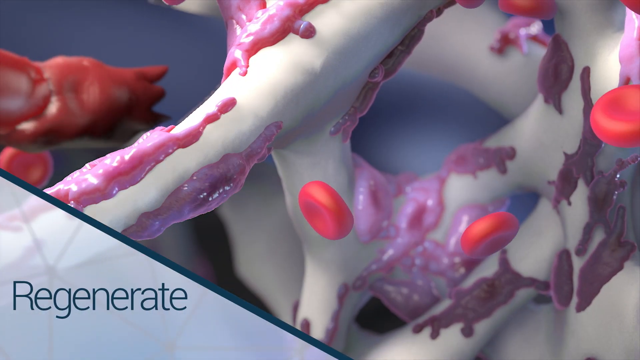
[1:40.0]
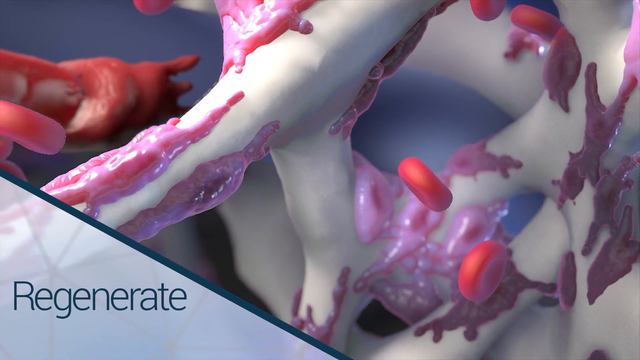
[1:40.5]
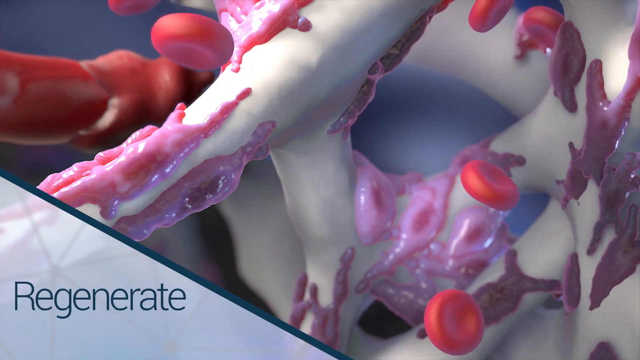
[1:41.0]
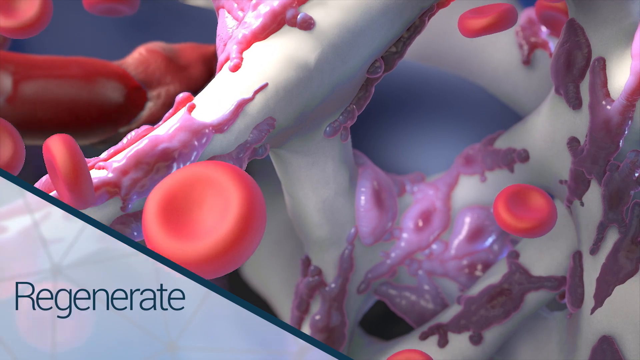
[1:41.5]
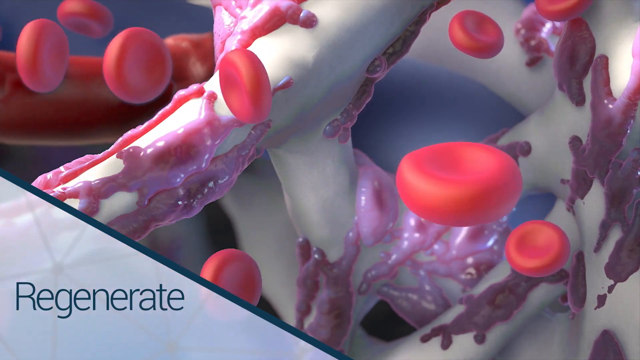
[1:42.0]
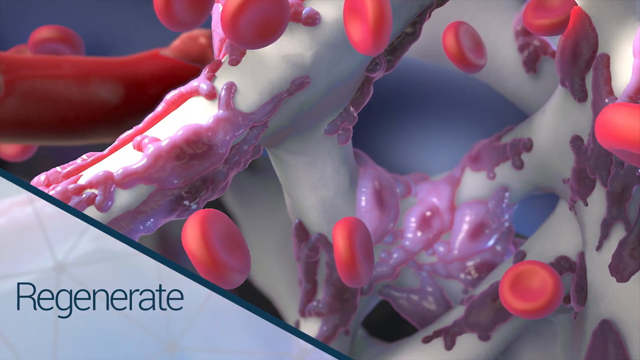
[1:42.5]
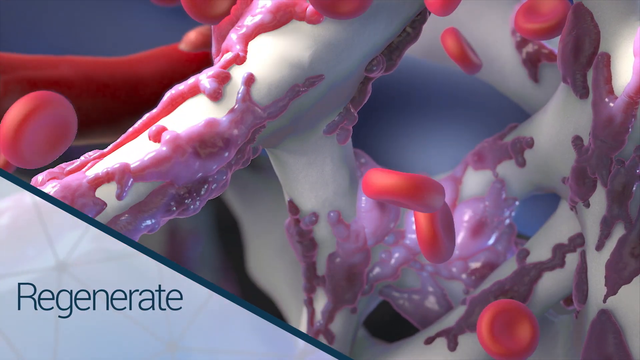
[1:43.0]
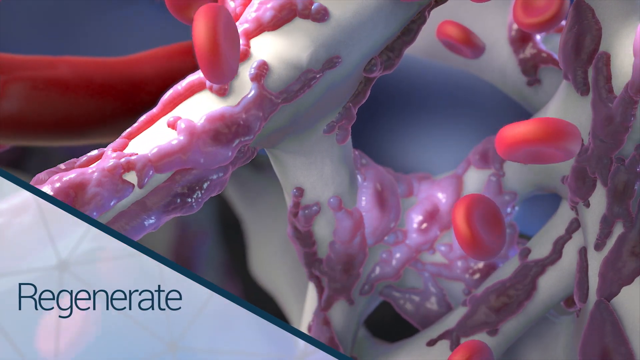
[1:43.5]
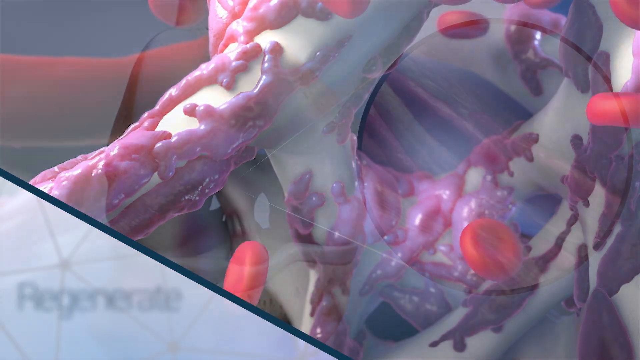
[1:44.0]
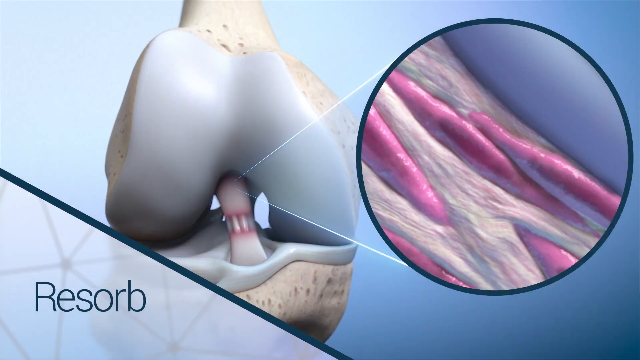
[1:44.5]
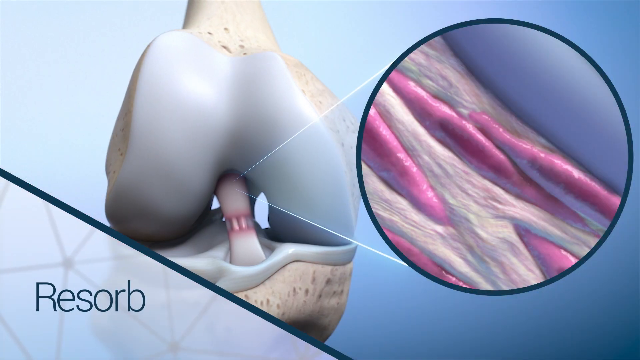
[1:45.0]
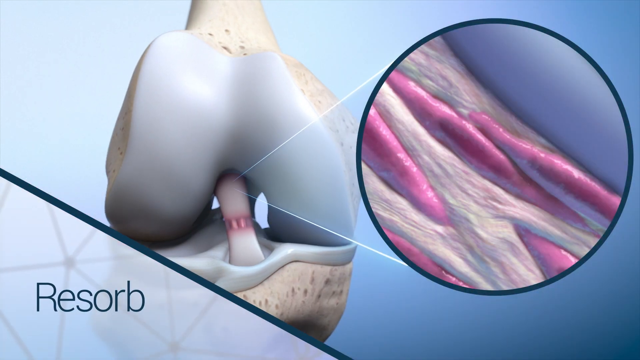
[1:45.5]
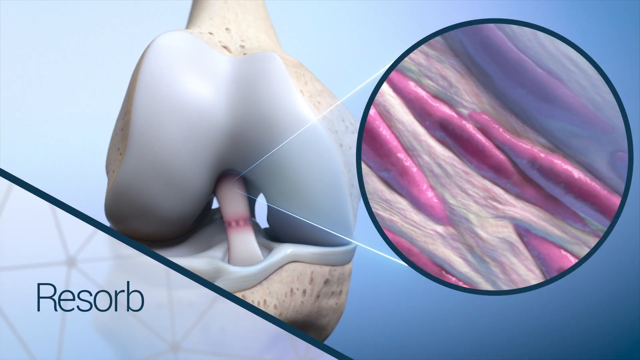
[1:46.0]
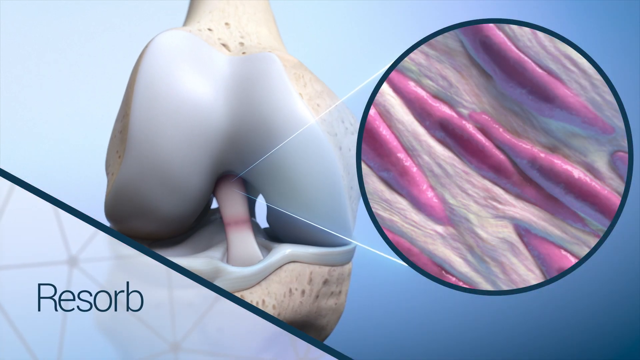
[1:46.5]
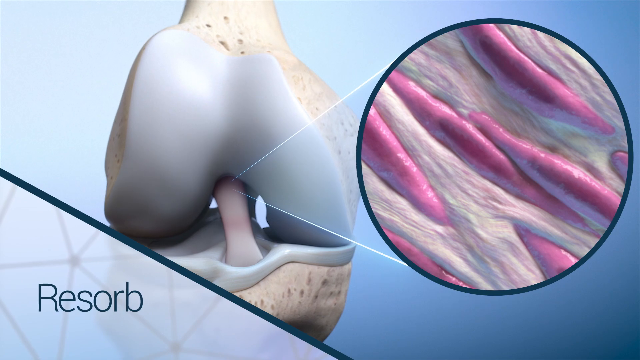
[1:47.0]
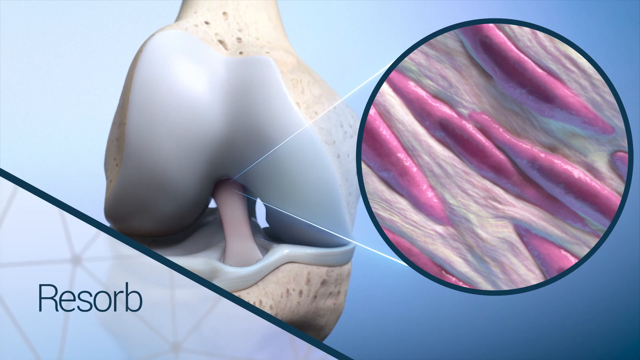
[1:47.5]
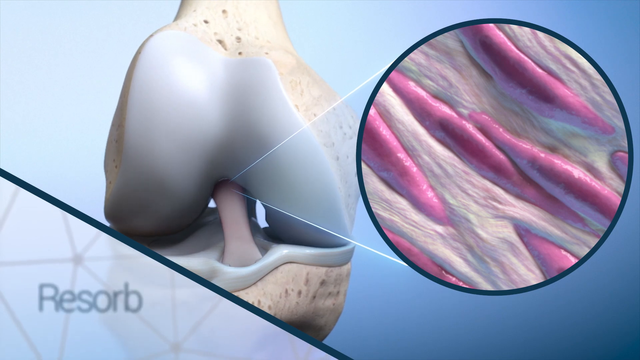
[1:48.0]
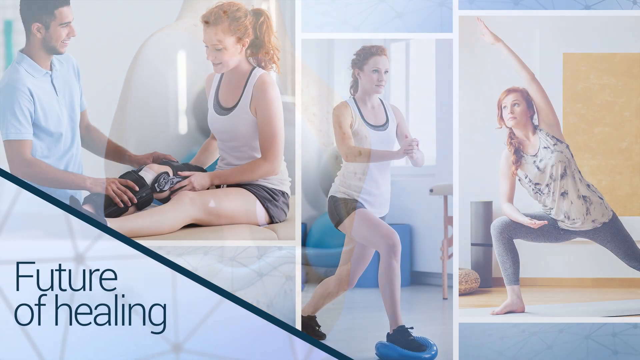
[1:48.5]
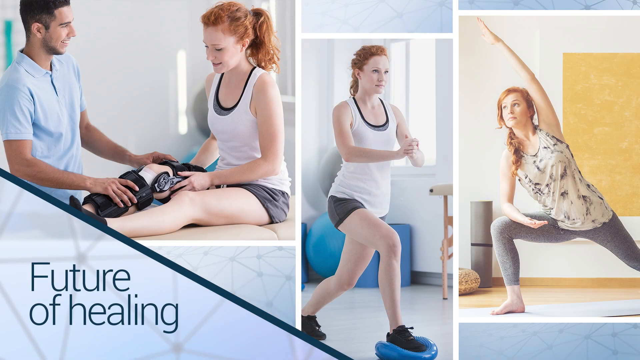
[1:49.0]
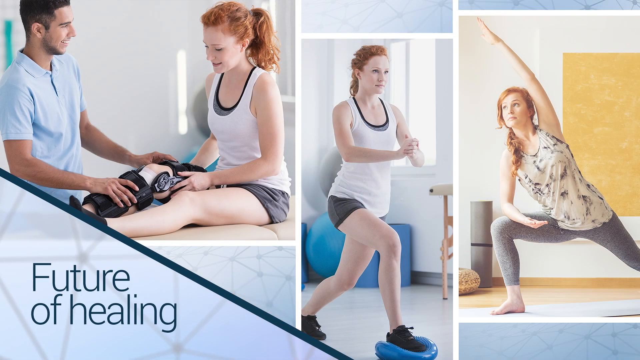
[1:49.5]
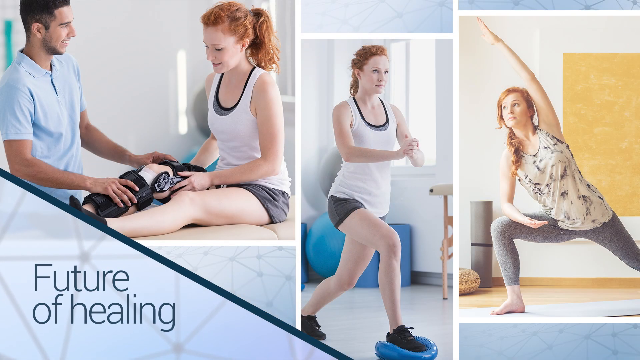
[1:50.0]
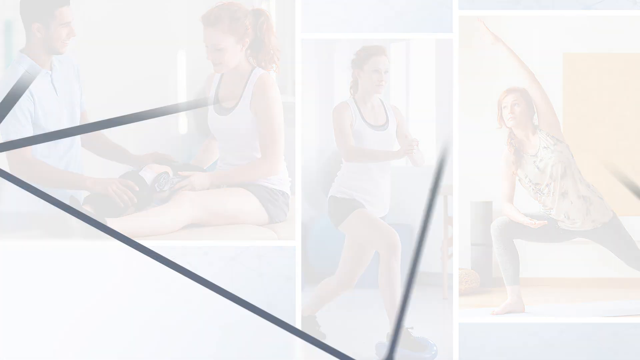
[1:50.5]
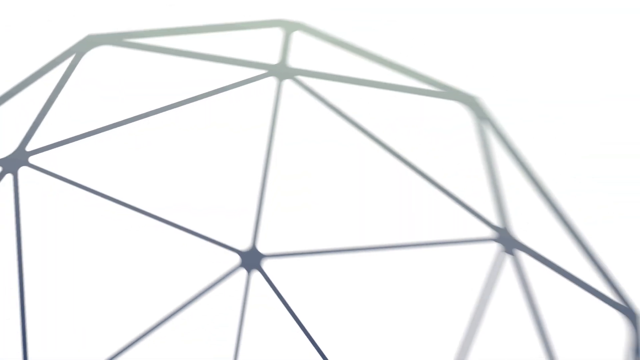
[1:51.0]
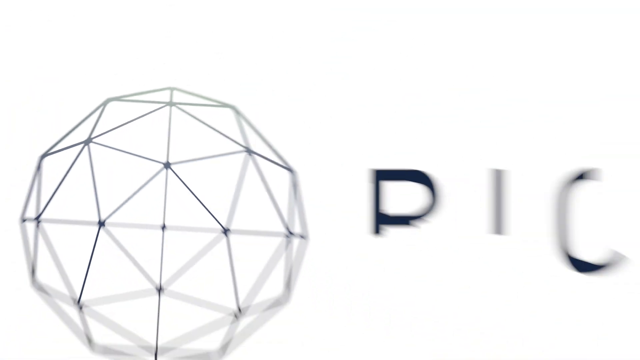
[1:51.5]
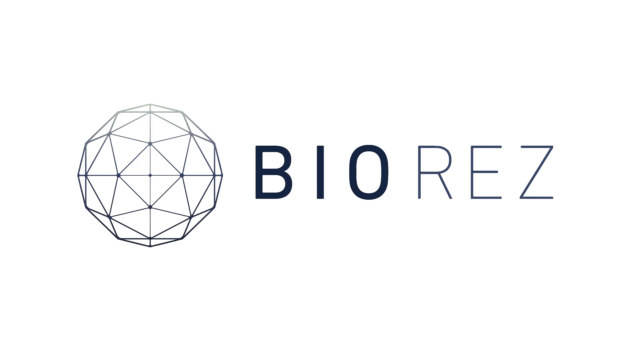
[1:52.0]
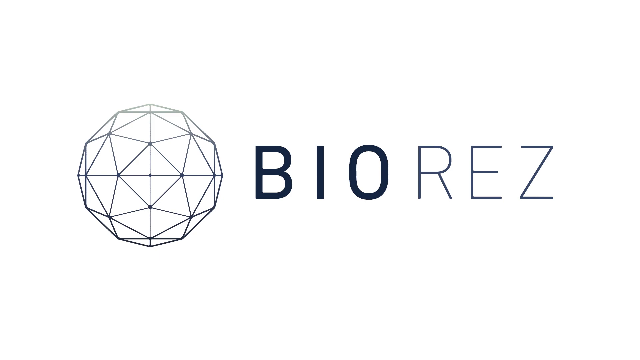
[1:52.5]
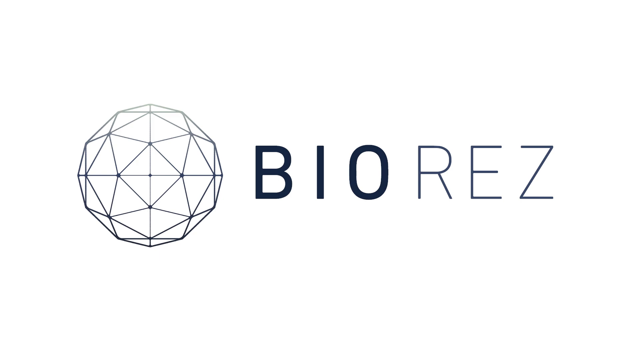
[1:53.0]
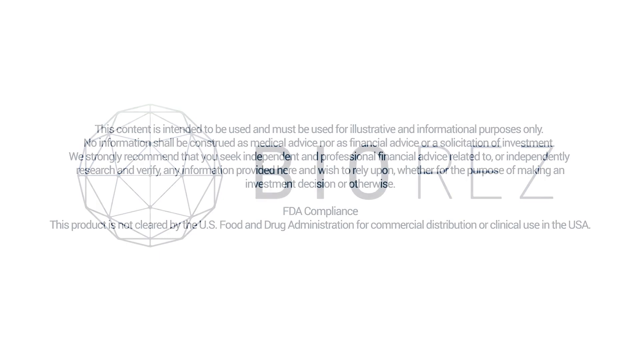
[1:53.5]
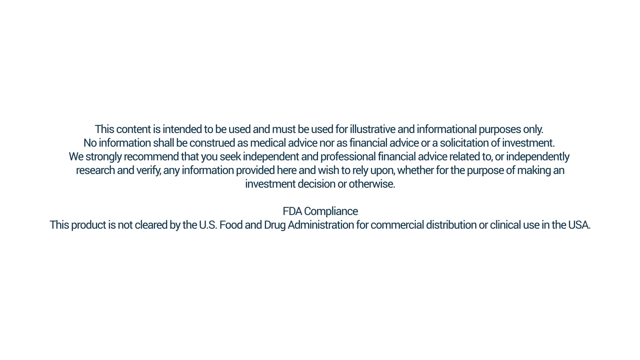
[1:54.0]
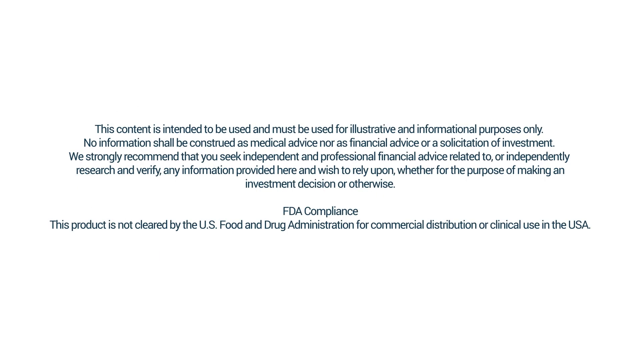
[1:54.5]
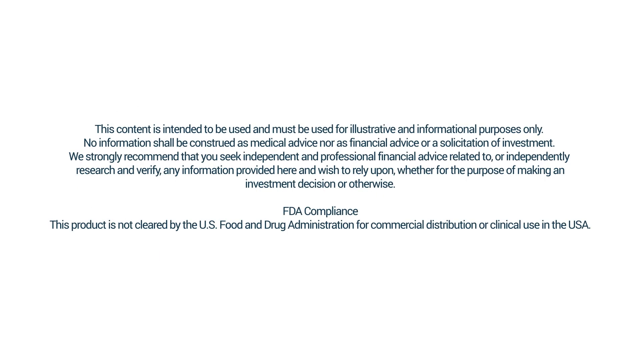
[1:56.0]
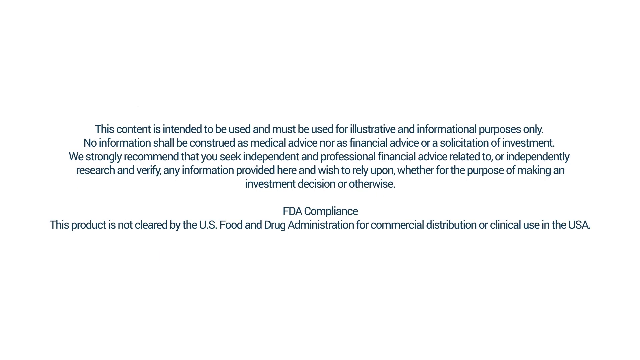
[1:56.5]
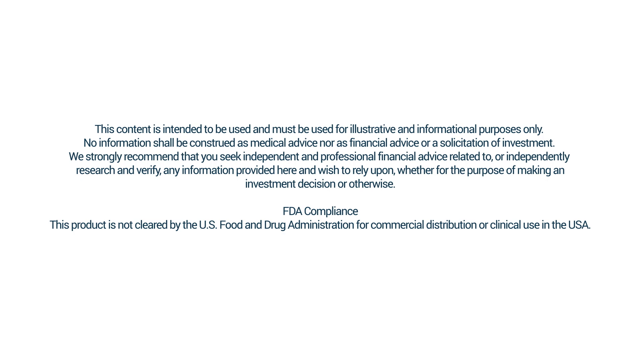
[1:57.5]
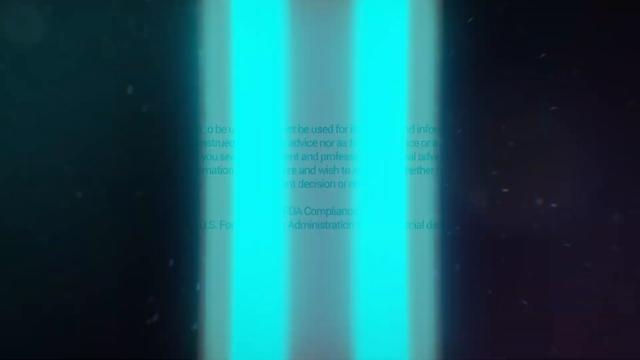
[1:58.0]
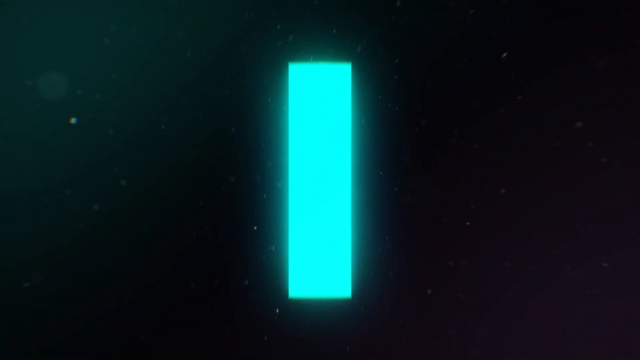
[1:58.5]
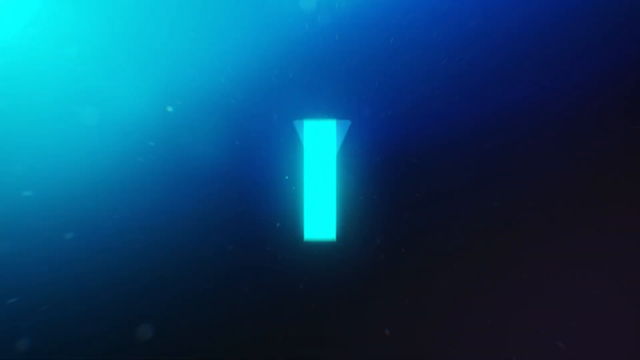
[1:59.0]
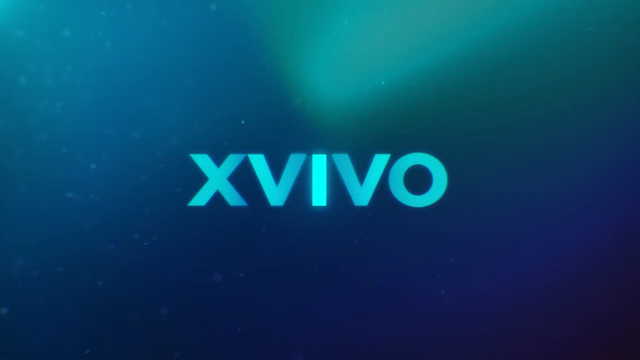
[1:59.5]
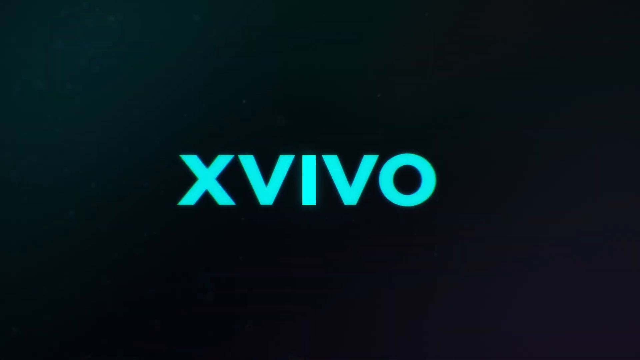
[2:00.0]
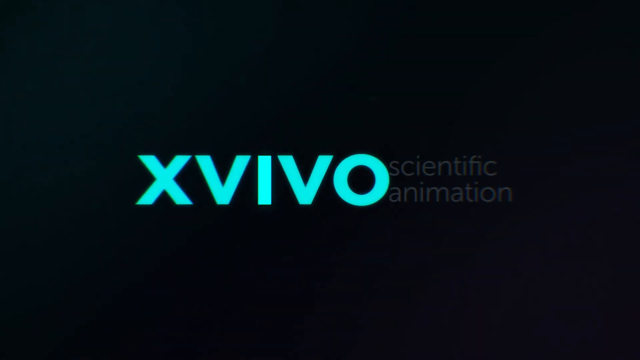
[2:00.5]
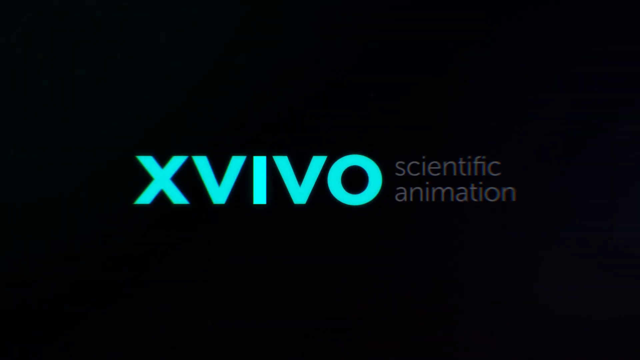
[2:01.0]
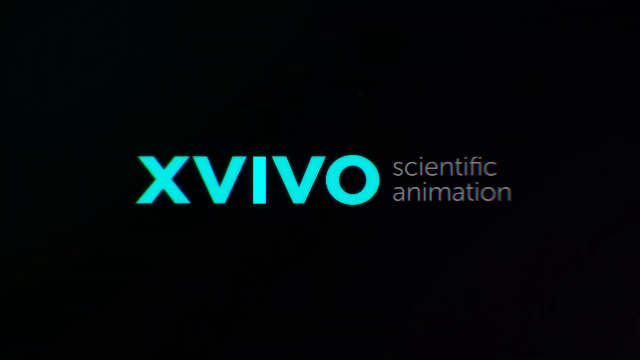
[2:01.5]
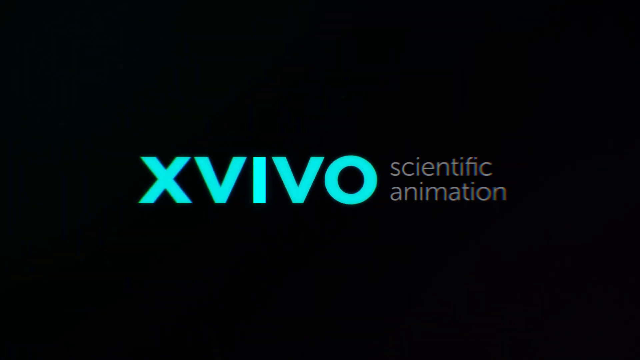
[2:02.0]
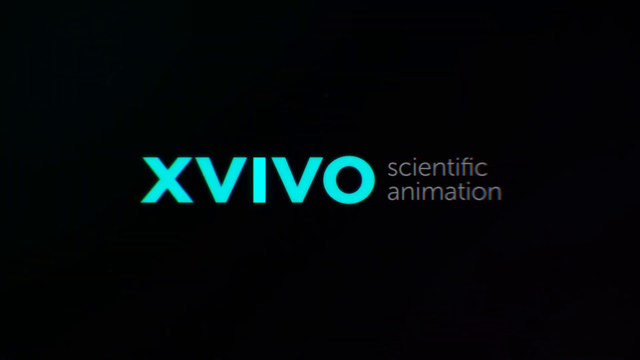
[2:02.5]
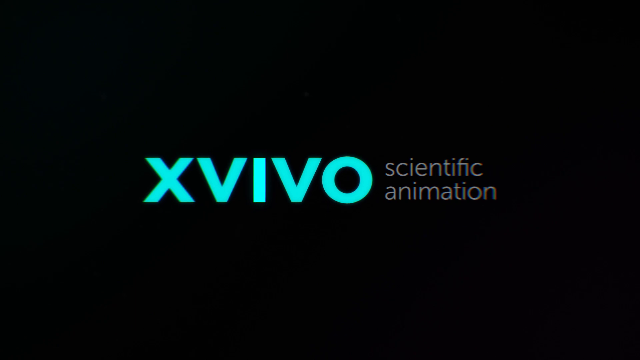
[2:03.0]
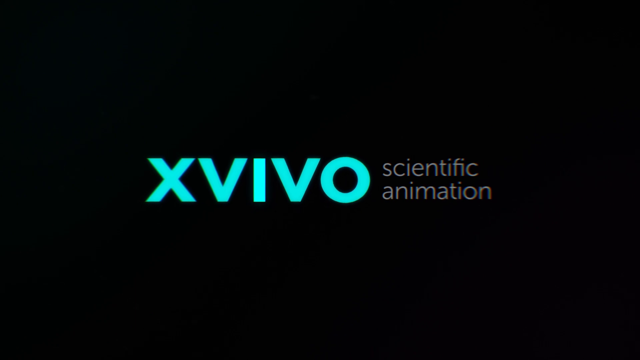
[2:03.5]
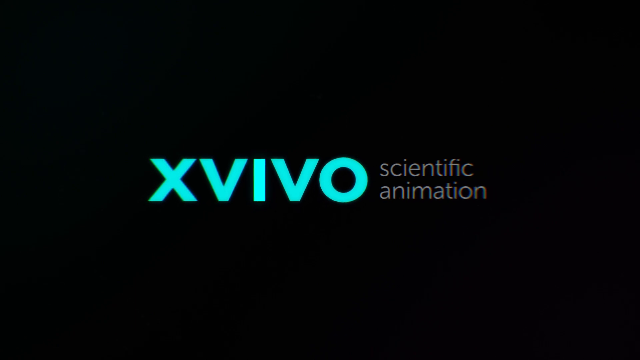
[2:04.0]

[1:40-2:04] A triangular text box in the bottom left reads "regenerate" in blue letters on a translucent white background. The rest of the screen shows the close-up, apparently seen before, with red blood cells swimming around and purple blotchy objects moving on the white matrix. The triangular box on the left then reads "resorb". The zoomed-out view of the bone is shown again, with the close-up on the right connected by a triangle, and there is some movement in the bone. A new screen follows, with "future of healing" in the lower left triangular text box, and three photographs. The left one shows a woman with red hair sitting on what could be an examining table, wearing a white tank top over a gray tank top and gray shorts; a man in a blue shirt is to her left, holding some kind of object on her leg. In the middle photograph, the woman is alone, doing what looks like yoga. In the right photograph, she is also doing yoga, leaning over to the left of the screen, wearing a different shirt and long gray yoga pants, with a yellow oblong on the wall behind her on the right-hand side.